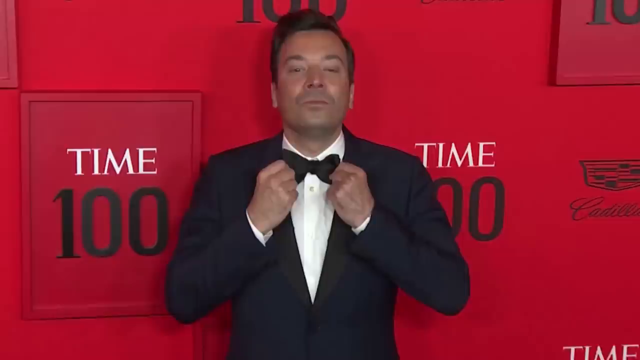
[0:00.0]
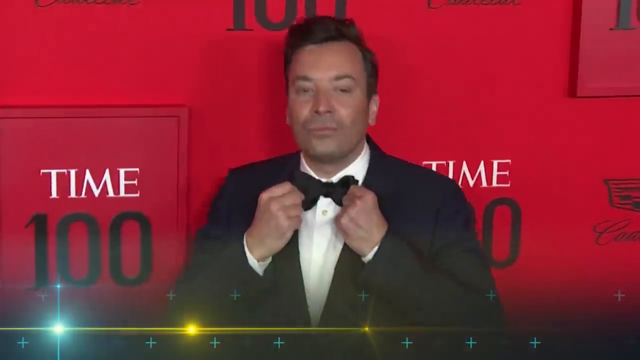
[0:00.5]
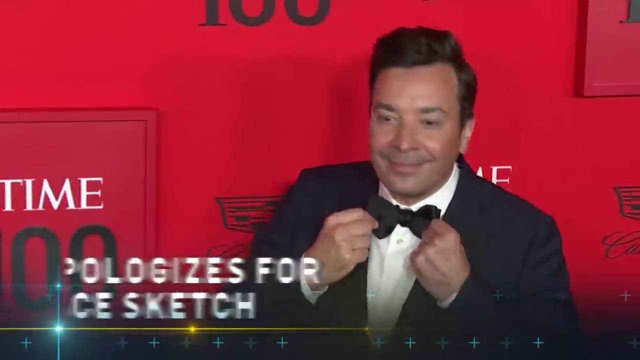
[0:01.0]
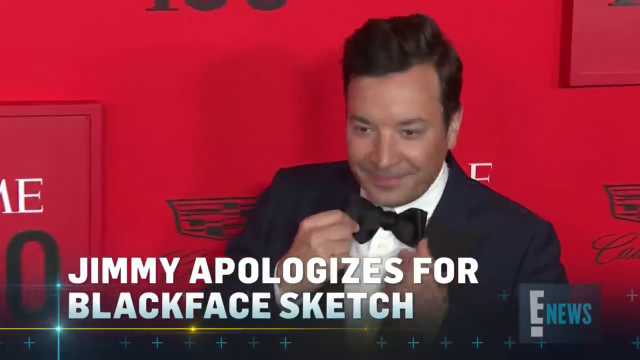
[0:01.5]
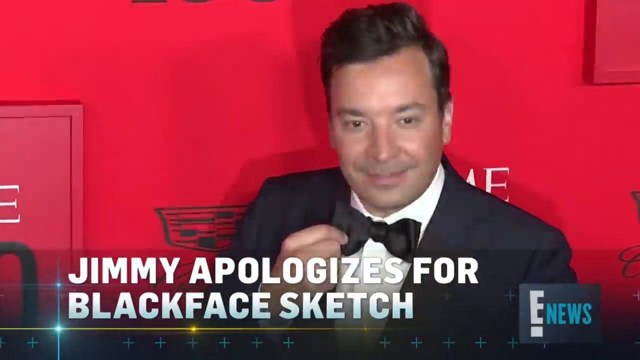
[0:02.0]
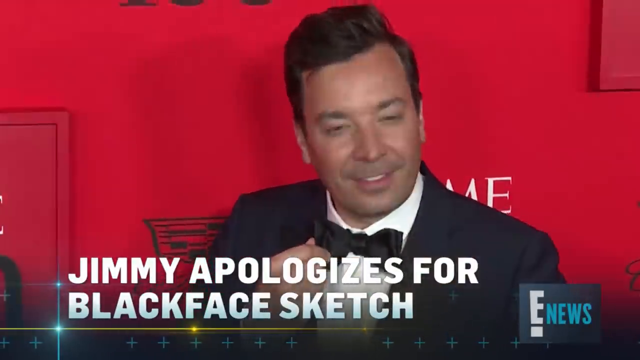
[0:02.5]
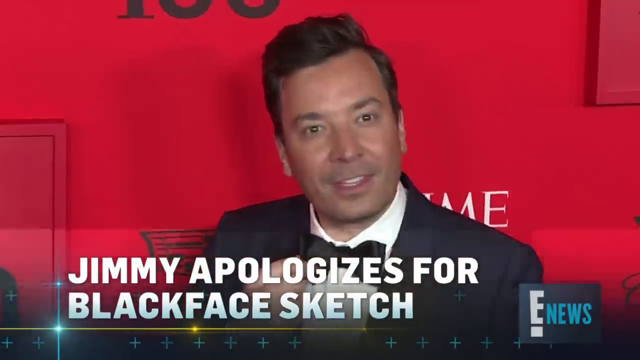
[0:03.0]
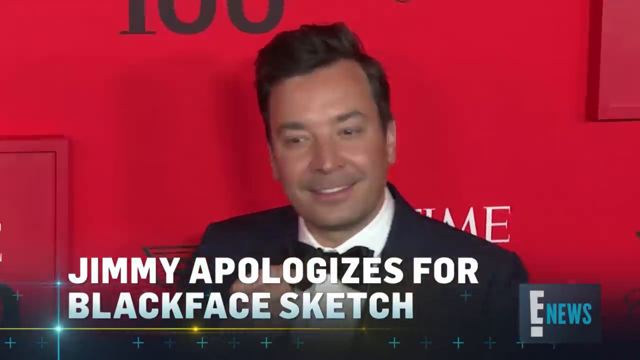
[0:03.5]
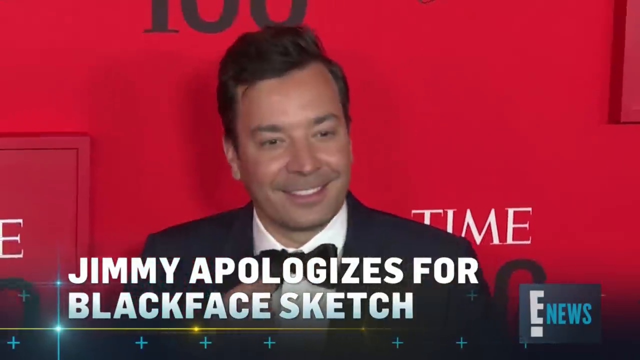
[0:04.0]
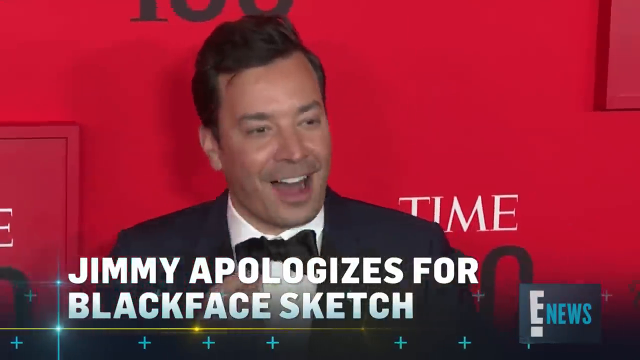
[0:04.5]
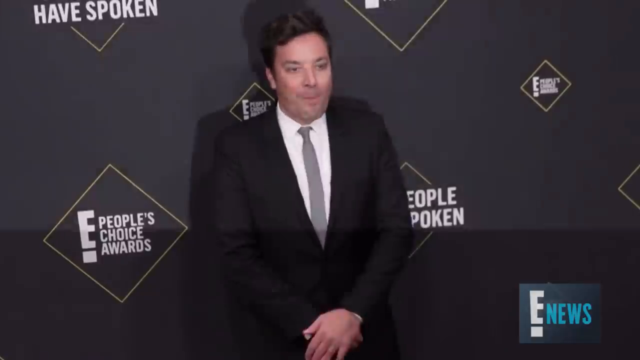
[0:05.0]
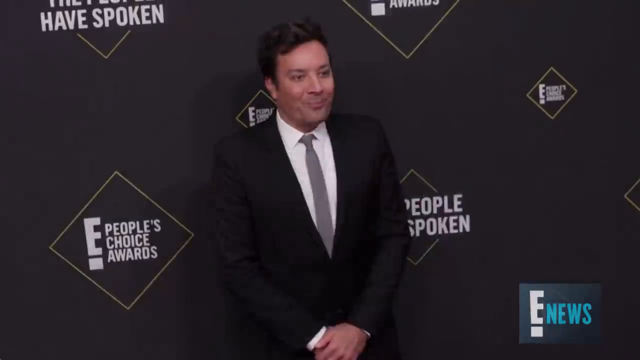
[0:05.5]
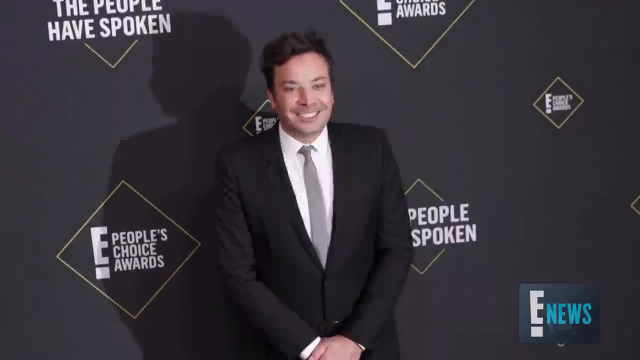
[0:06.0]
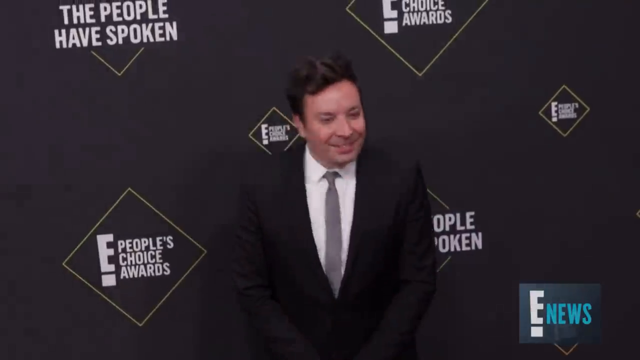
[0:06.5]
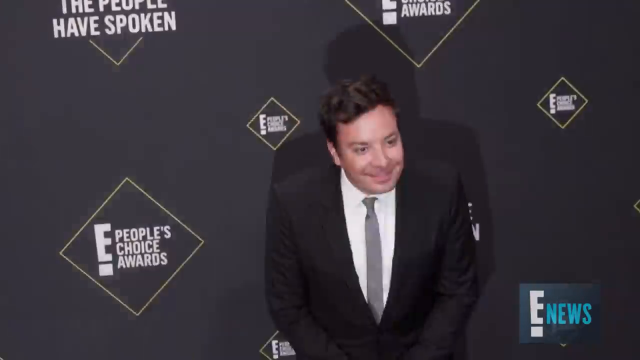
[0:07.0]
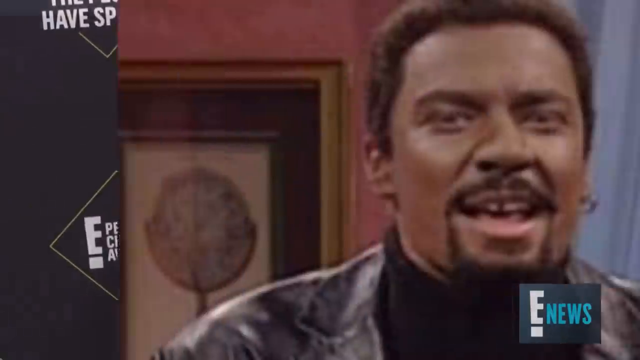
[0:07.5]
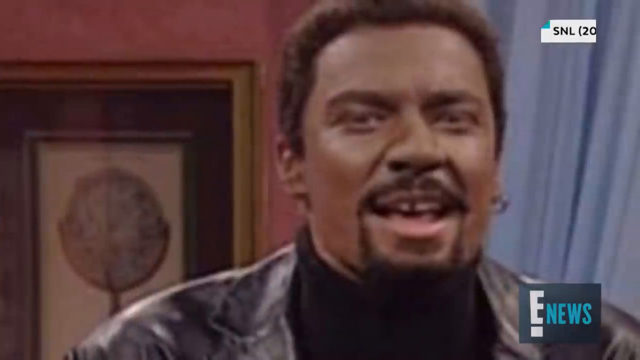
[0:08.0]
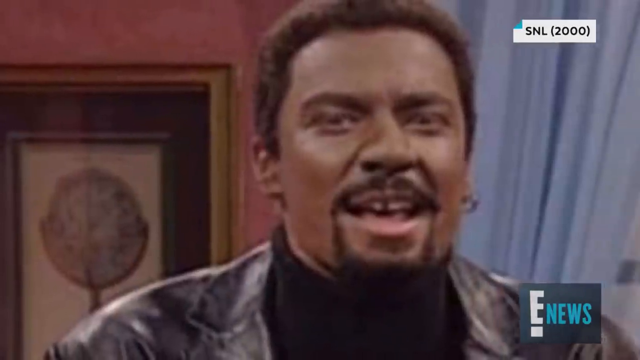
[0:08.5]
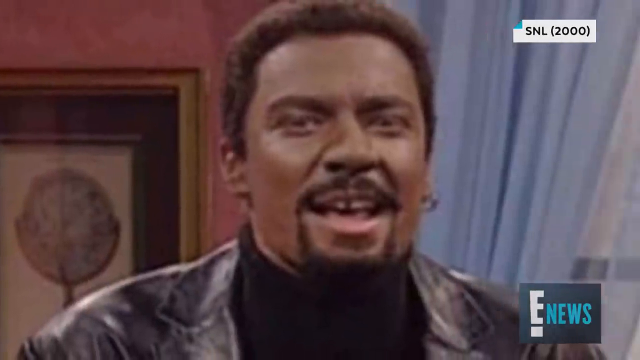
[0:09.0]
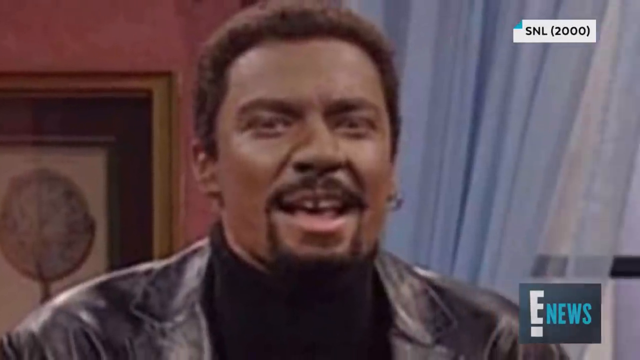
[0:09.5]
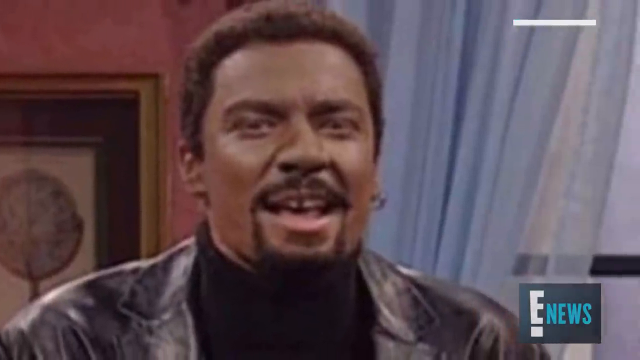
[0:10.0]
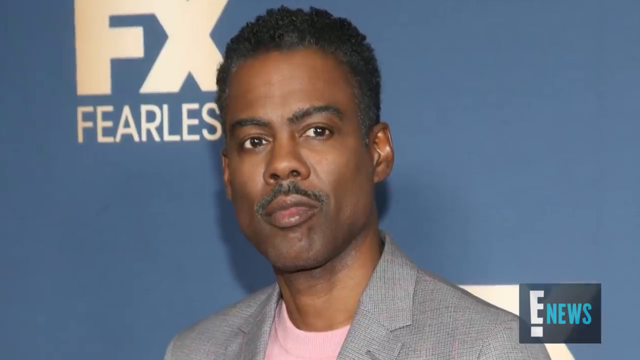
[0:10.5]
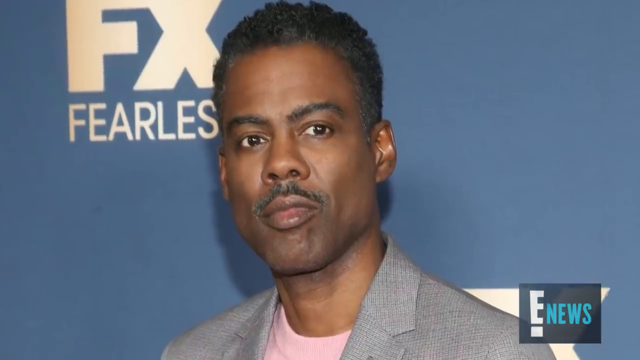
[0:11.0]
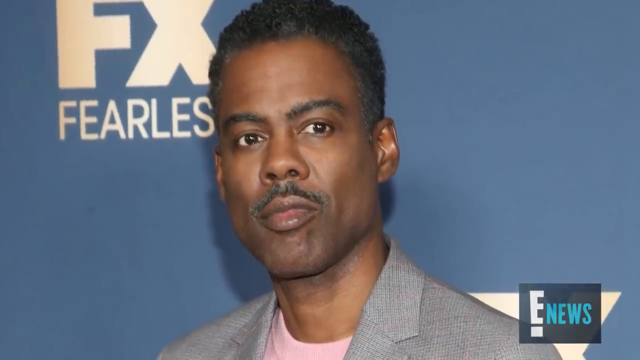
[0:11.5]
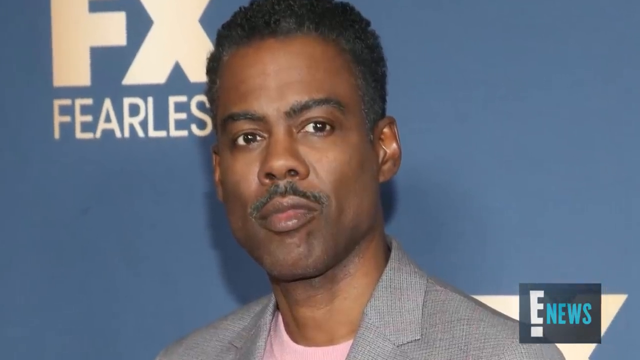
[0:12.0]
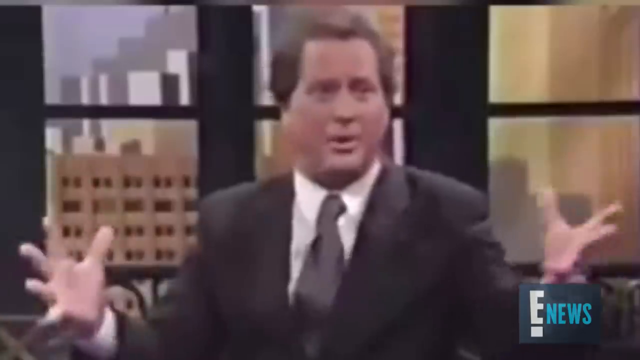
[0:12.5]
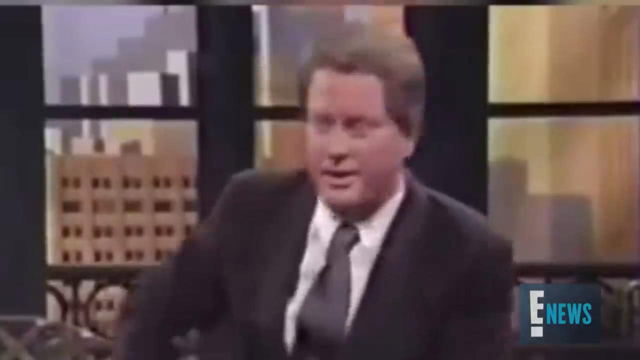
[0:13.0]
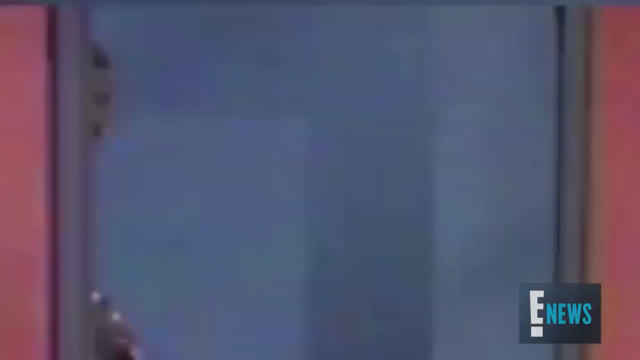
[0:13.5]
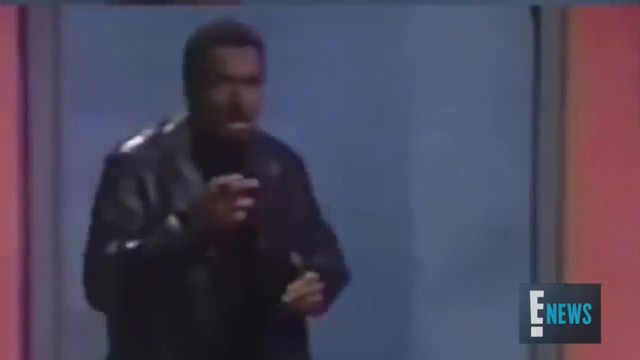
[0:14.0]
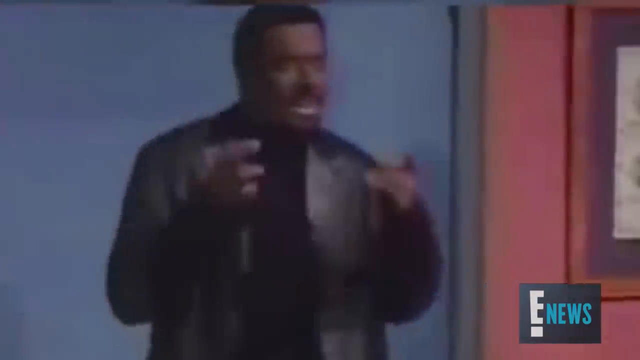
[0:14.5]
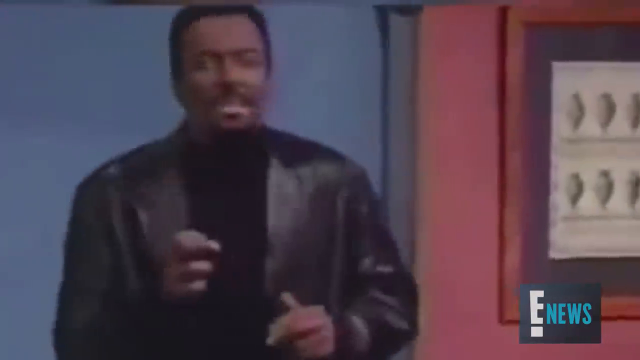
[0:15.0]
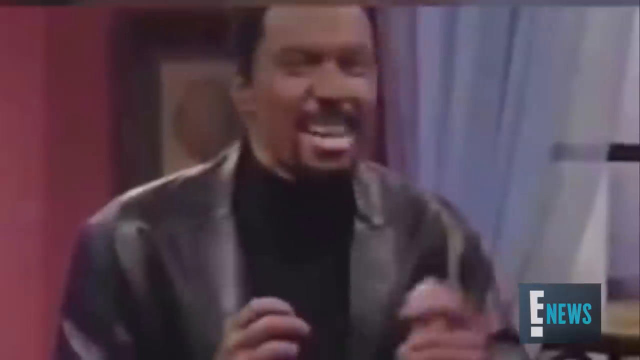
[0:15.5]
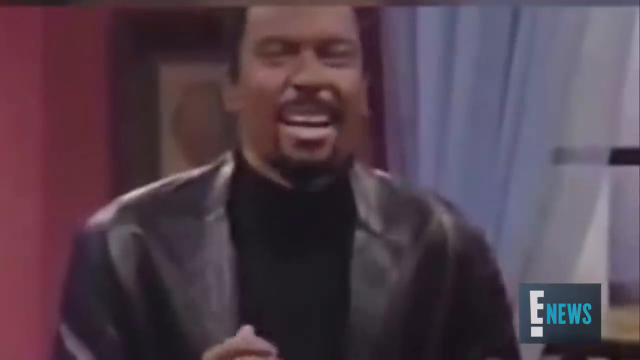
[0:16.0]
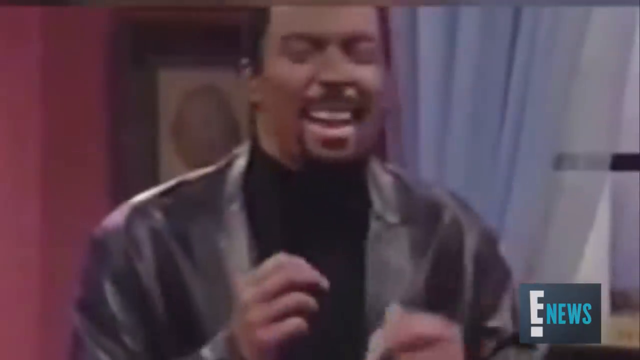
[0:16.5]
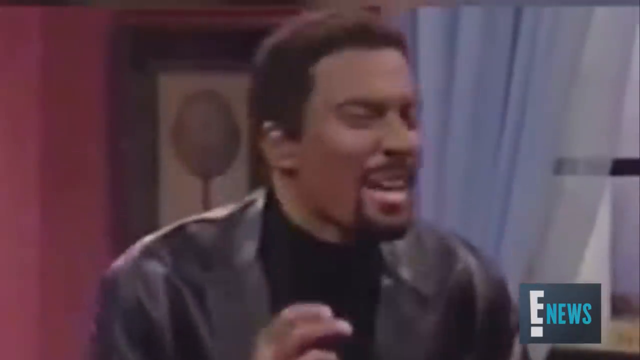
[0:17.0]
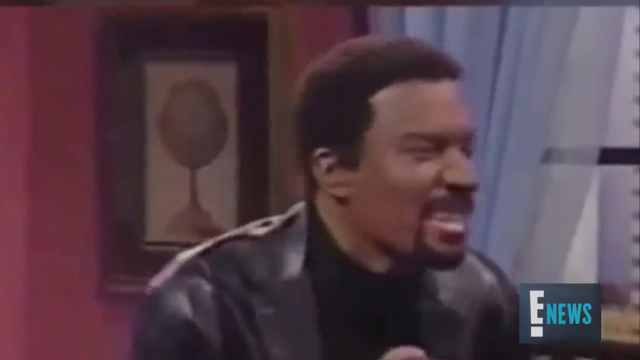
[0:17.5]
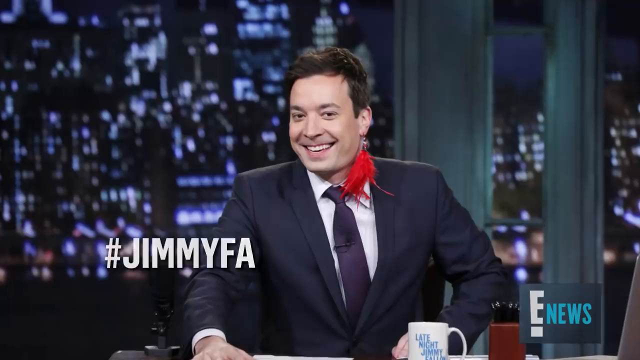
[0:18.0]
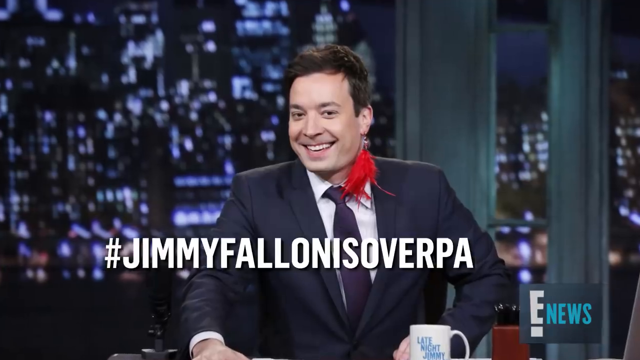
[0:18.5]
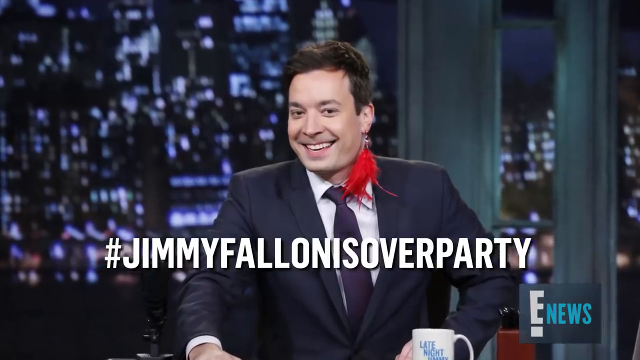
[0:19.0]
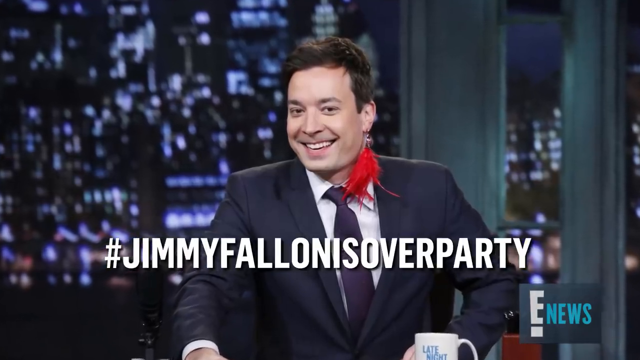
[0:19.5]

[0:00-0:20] A man in a black tuxedo and bow tie stands in front of a bright red background with white text. A headline at the bottom reads "Jimmy apologizes for blocking this page." The right corner shows what appears to be a media event, with a red background and words written in white, some in black. The scene shifts to the same person on the left, still in a black tuxedo, now standing against a dark backdrop with text and logos that appear to be event branding. On the right side of the screen is a close-up of another man with short hair and a mustache, wearing a dark jacket over a light shirt. The E-news logo remains visible at the bottom right. Several shots of other men who seem to be celebrities also appear.